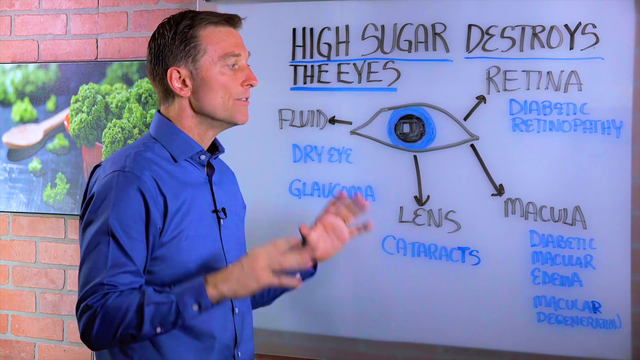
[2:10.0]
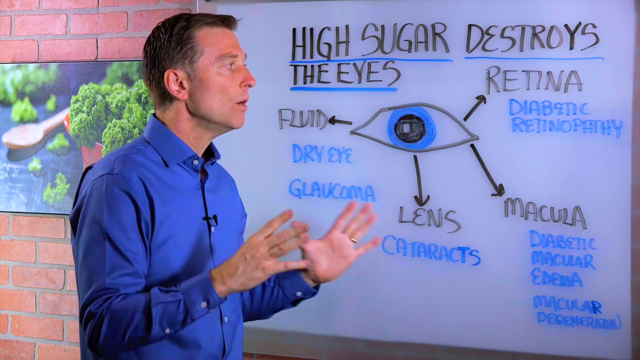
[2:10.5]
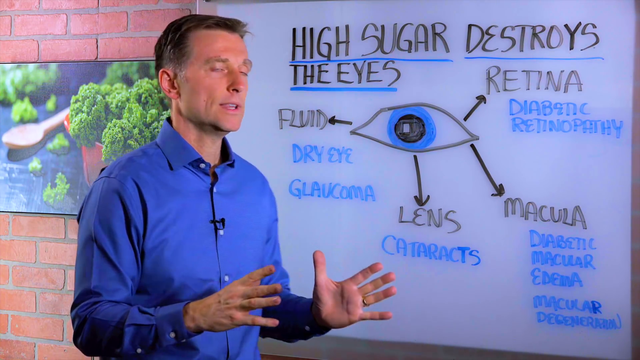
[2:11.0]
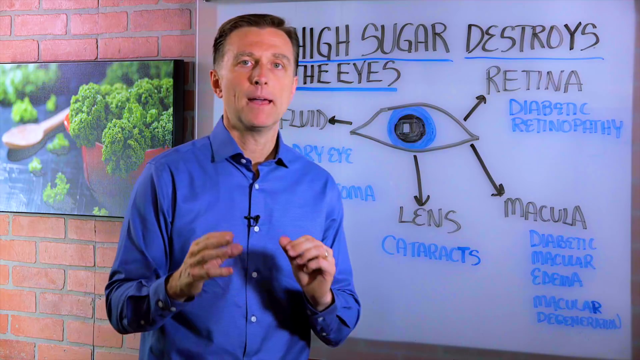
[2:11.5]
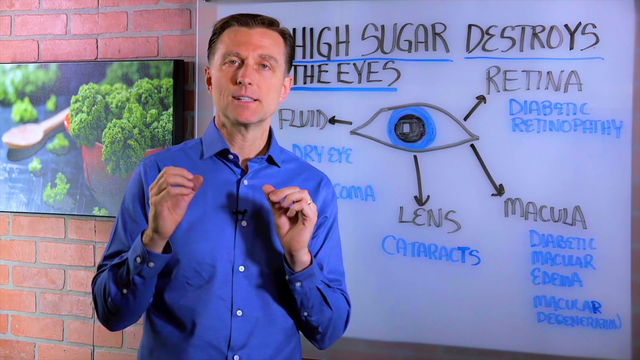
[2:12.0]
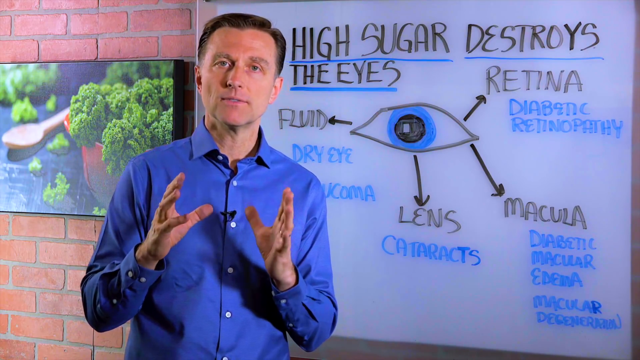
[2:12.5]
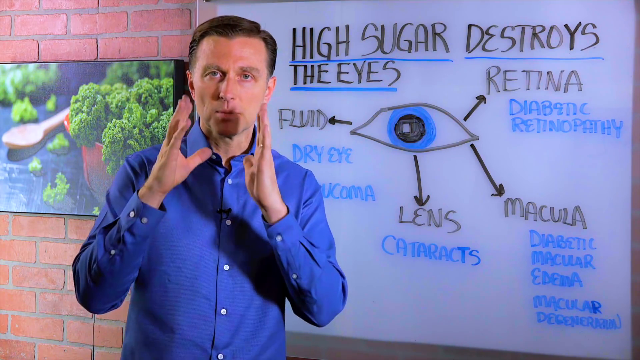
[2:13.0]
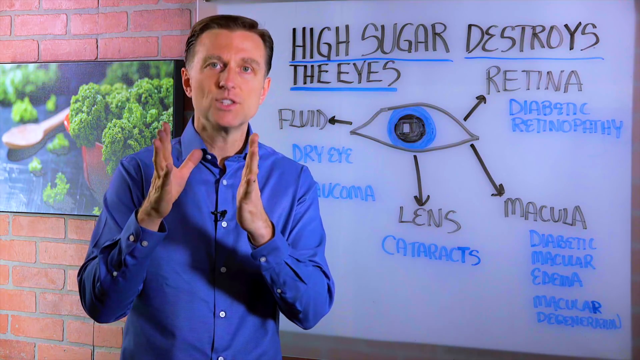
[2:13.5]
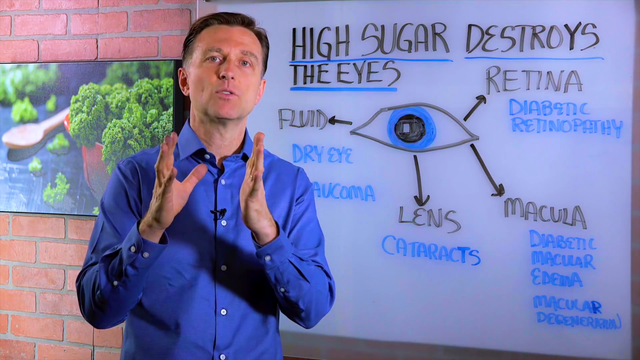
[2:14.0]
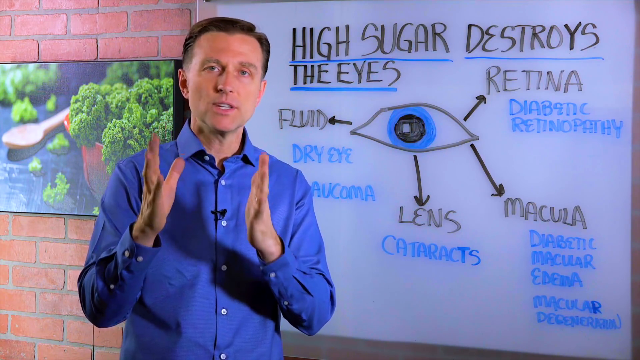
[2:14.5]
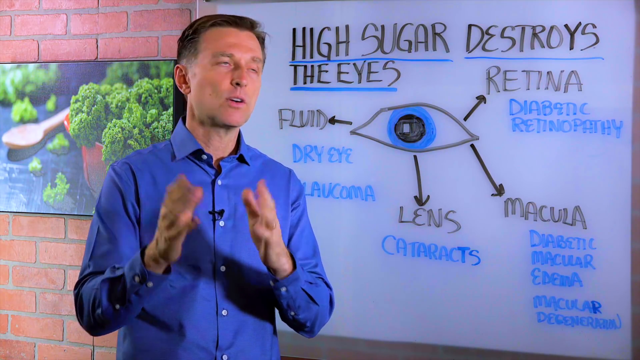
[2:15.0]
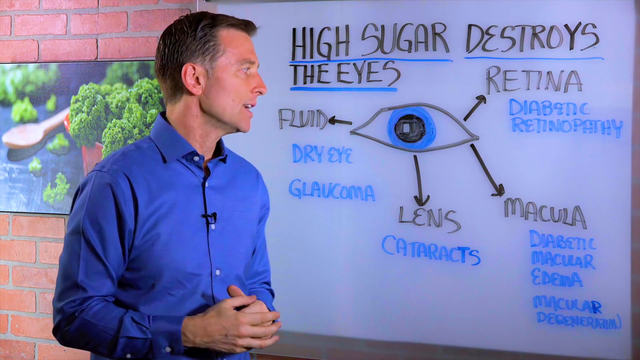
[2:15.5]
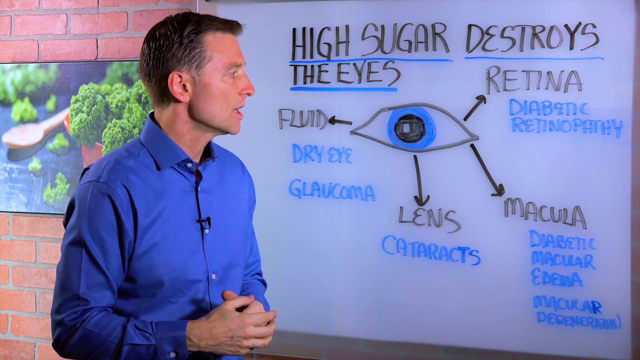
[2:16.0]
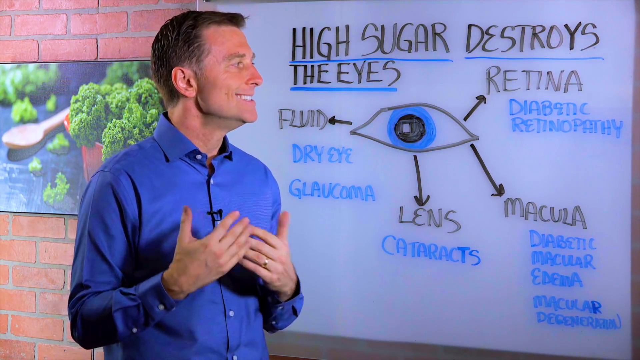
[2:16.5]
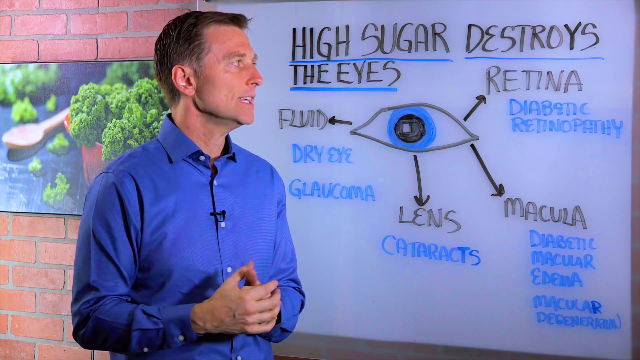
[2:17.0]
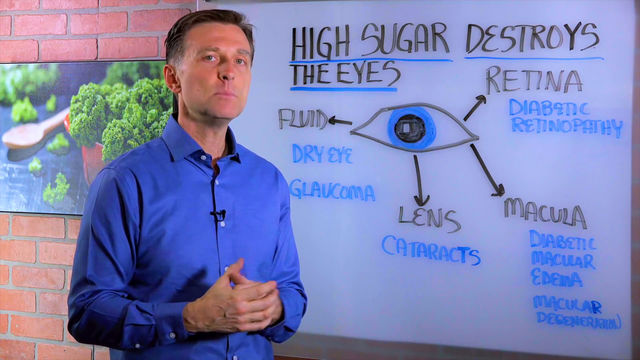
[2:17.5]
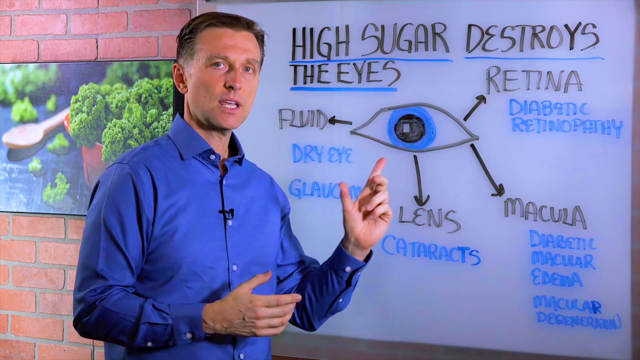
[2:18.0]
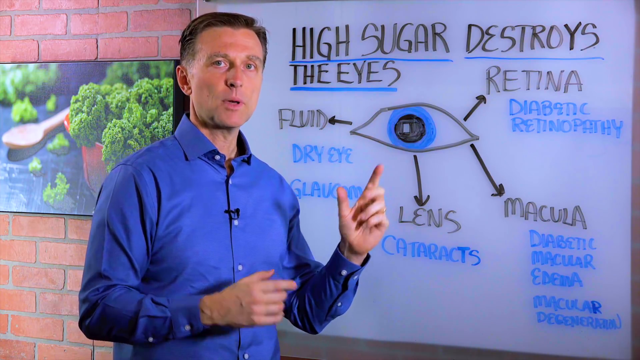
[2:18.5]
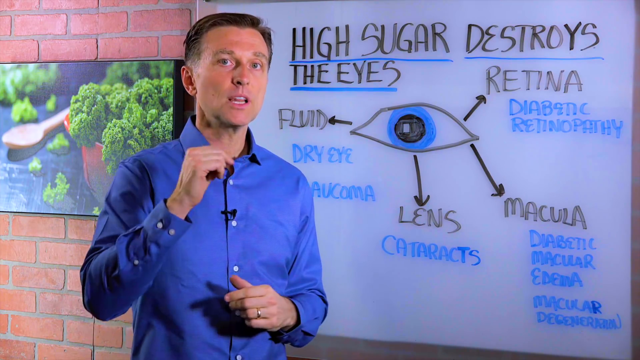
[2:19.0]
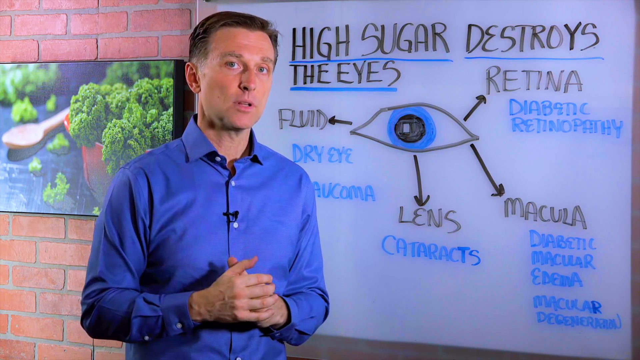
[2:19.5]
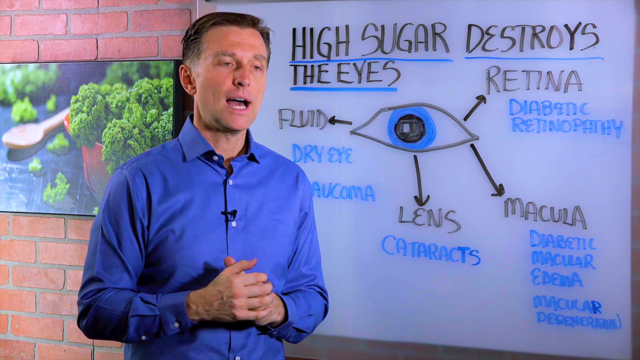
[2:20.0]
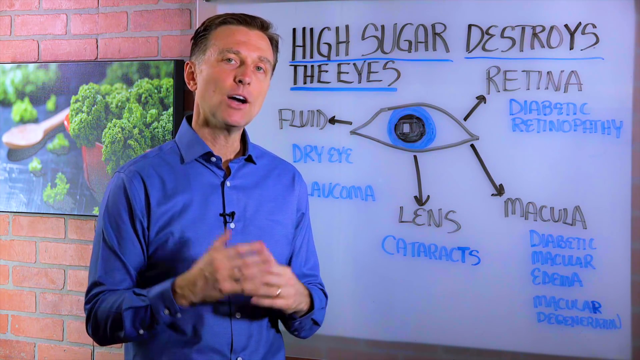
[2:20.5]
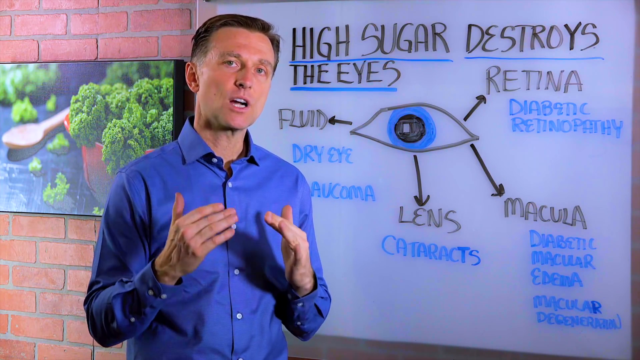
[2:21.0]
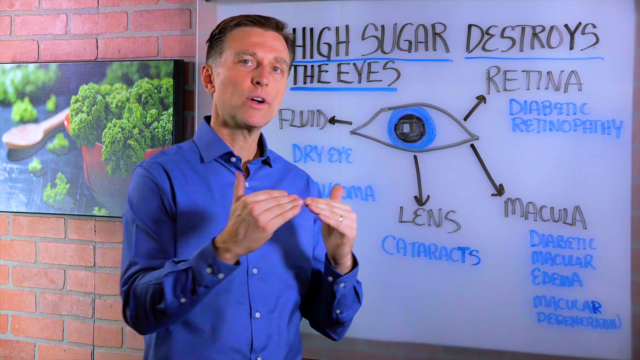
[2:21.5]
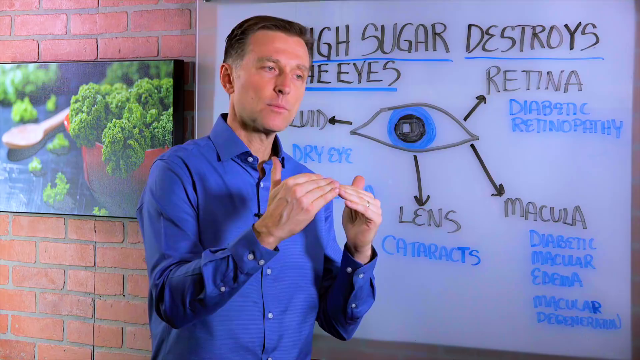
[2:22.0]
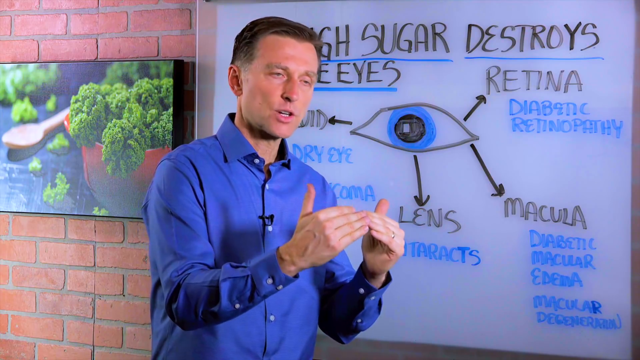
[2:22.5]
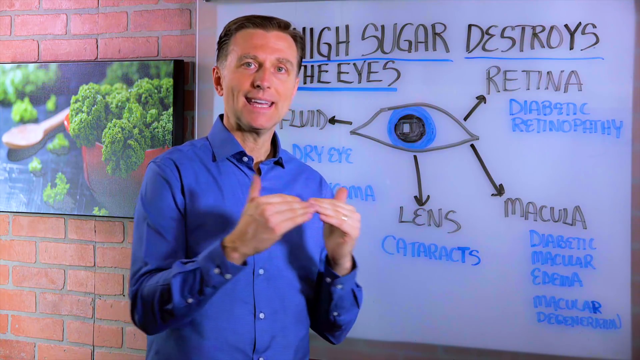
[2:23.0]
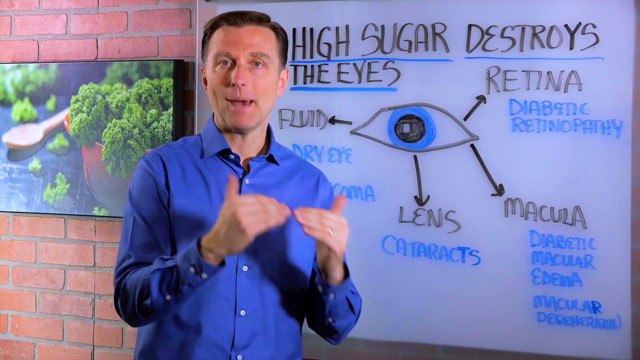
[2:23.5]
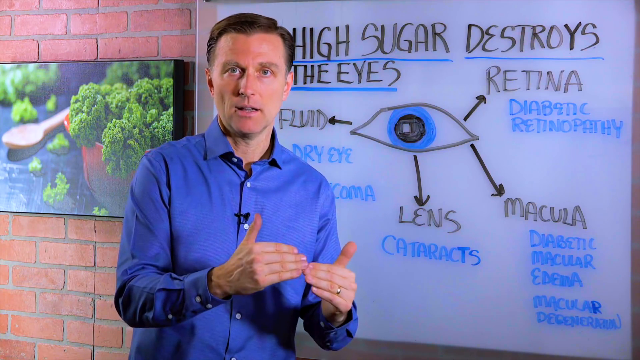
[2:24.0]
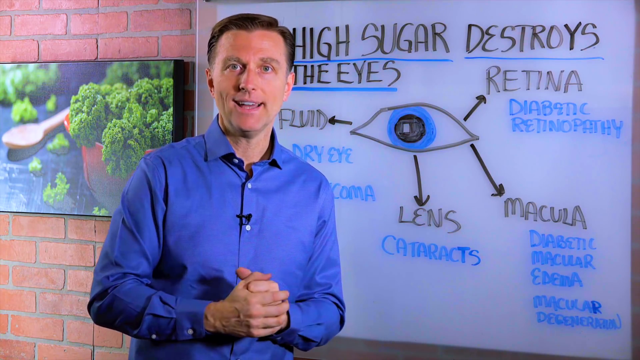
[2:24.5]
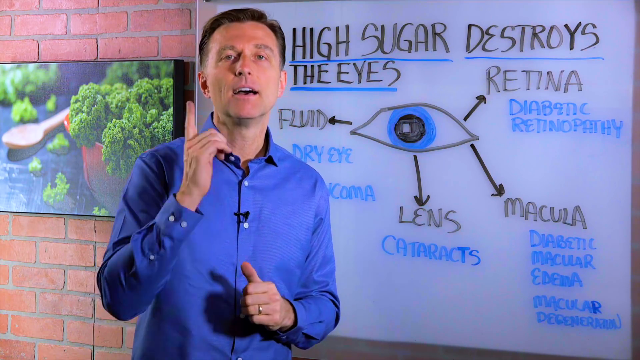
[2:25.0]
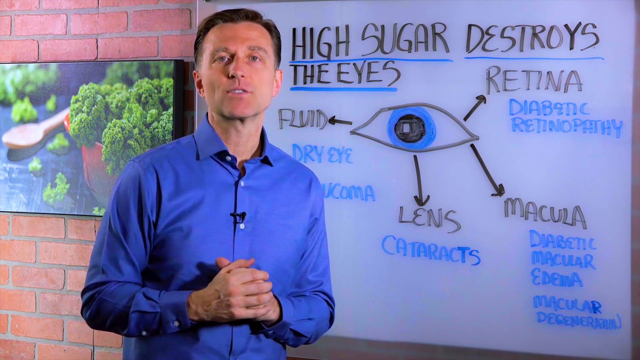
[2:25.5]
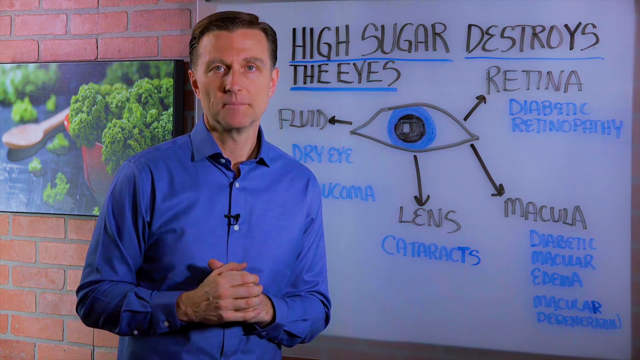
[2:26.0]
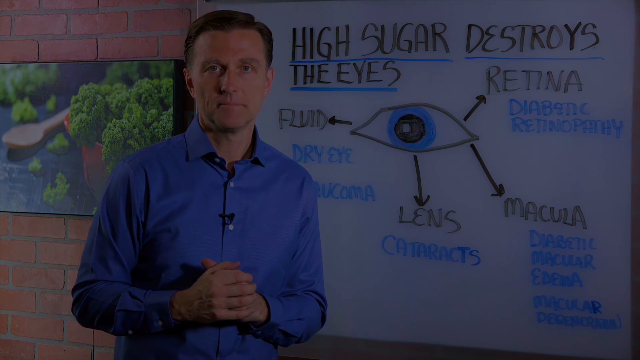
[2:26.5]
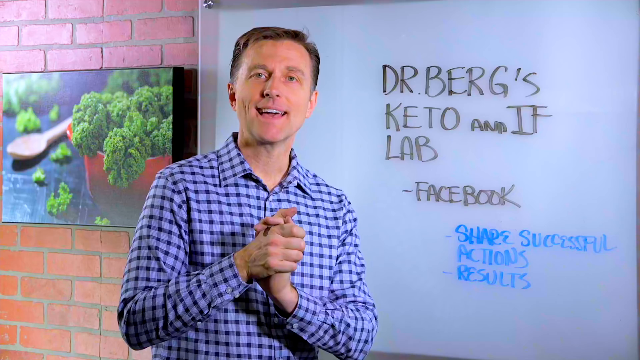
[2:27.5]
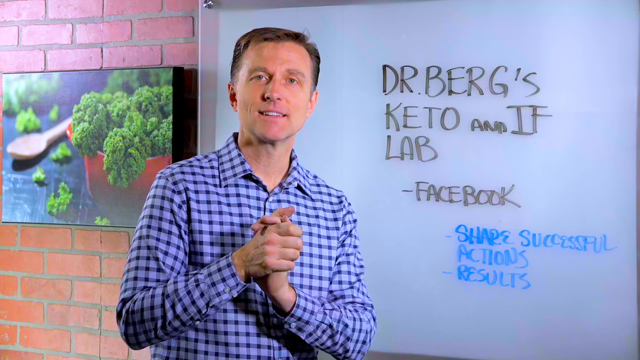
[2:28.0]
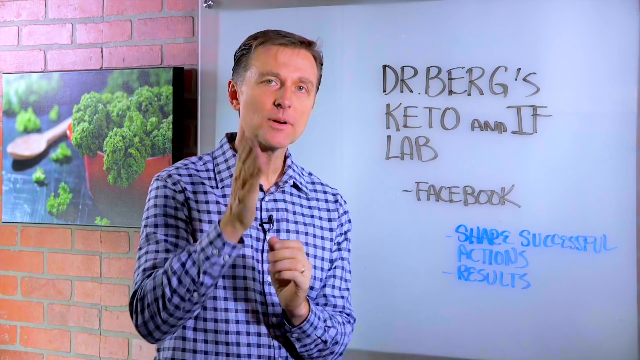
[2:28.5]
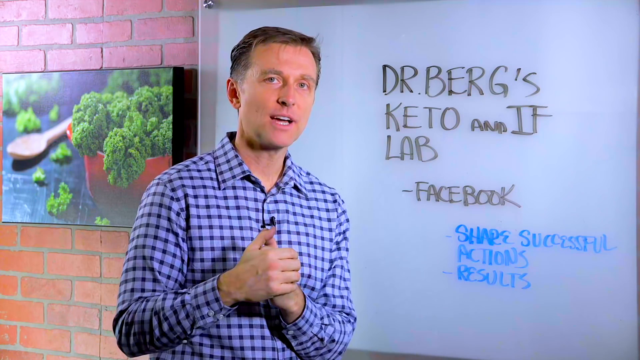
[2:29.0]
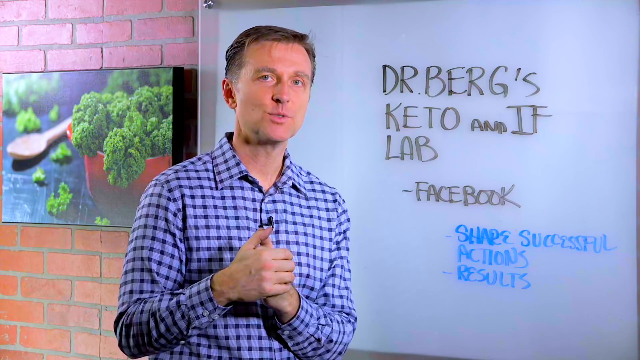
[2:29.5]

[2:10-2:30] Dr. Berg, Caucasian and perhaps in his late 40s, stands indoors in front of a large rectangular dry erase board wearing a blue shirt, seen only from the waist up. He turns toward his left to view the board, then quickly turns back toward the audience, moving his hands back and forth with fingers pointed upward. He grabs a dry erase marker and turns toward the words "glaucoma" and "high sugar." His left pointer finger suddenly points at the eye and comes back, and his right hand points upward. A quick shot follows of Dr. Berg in the same place but in a different shirt.